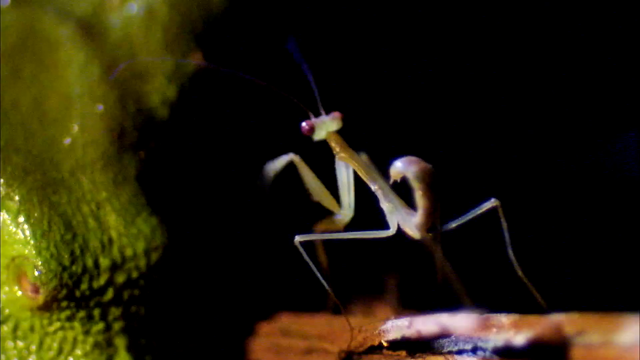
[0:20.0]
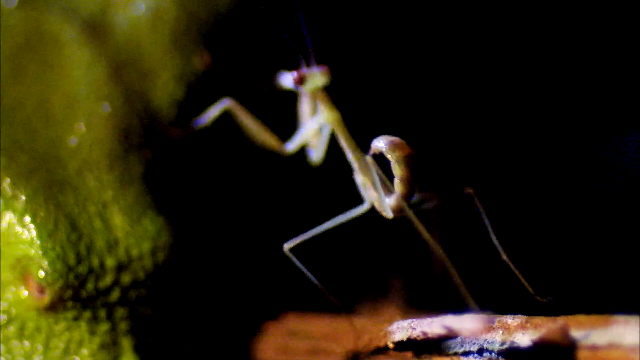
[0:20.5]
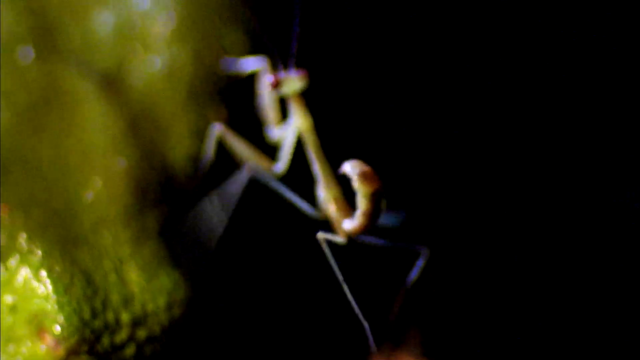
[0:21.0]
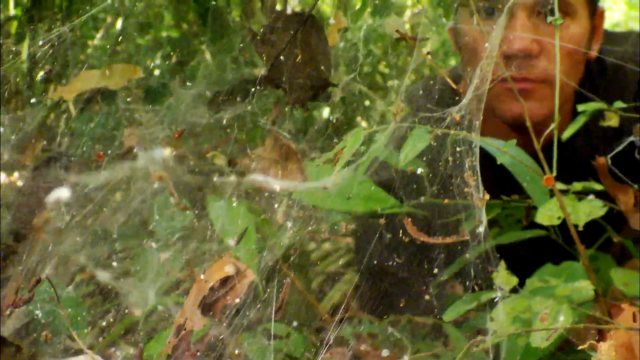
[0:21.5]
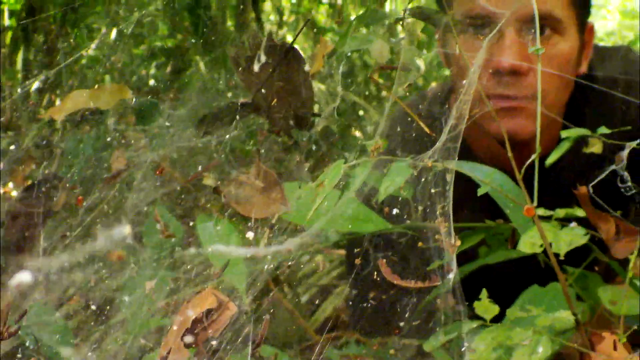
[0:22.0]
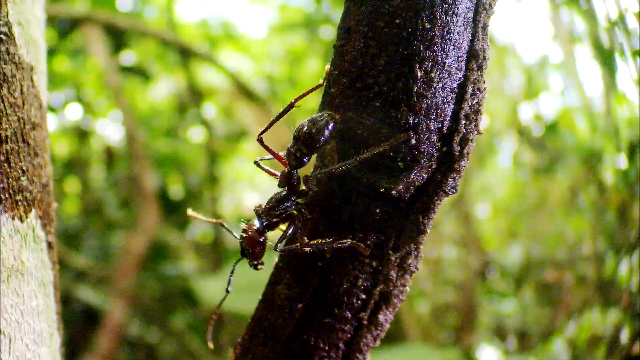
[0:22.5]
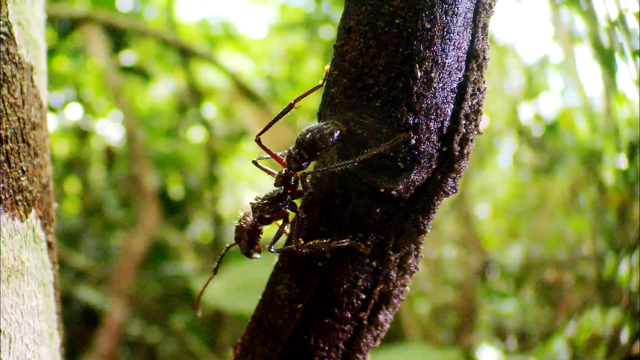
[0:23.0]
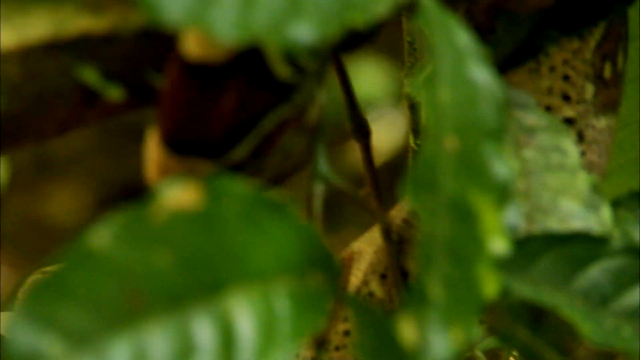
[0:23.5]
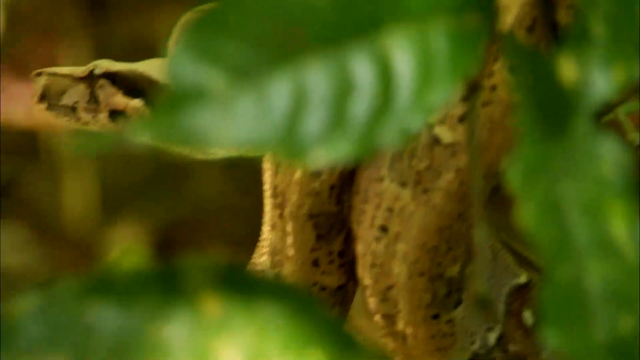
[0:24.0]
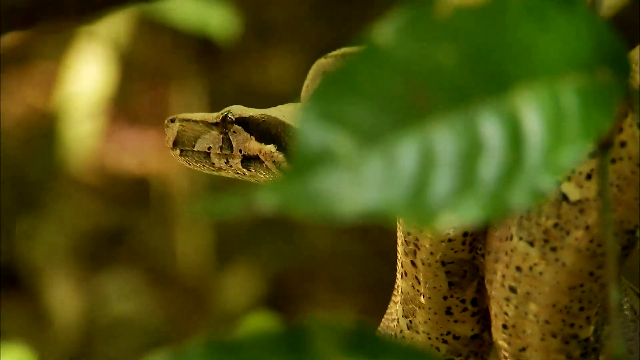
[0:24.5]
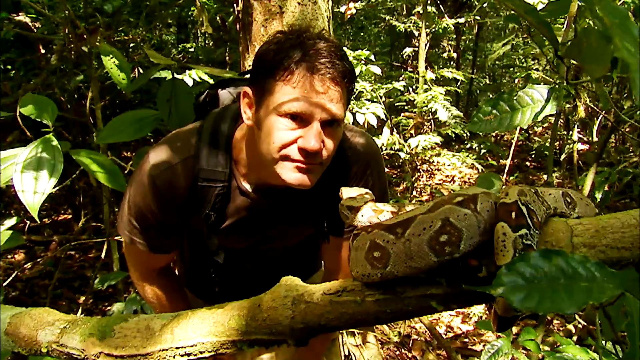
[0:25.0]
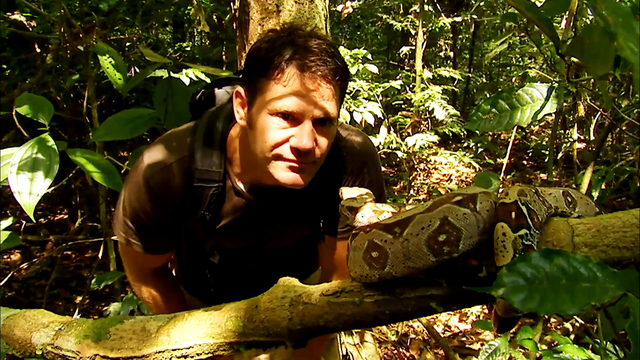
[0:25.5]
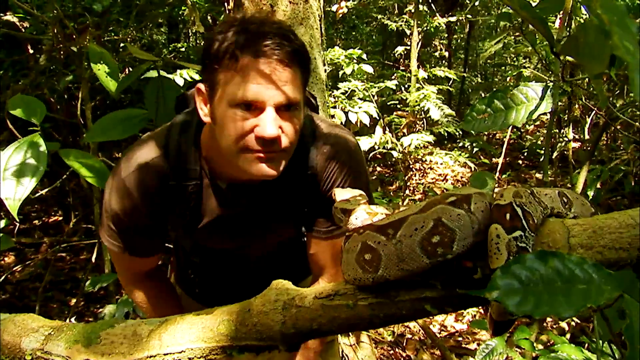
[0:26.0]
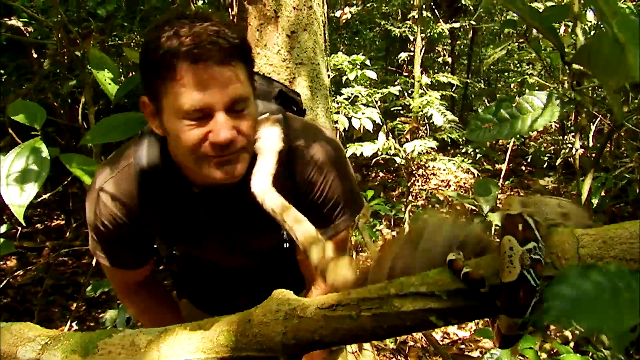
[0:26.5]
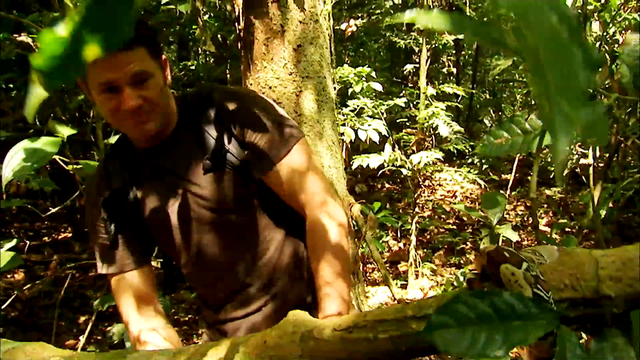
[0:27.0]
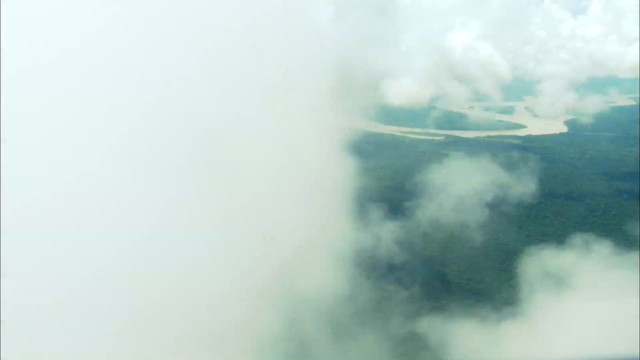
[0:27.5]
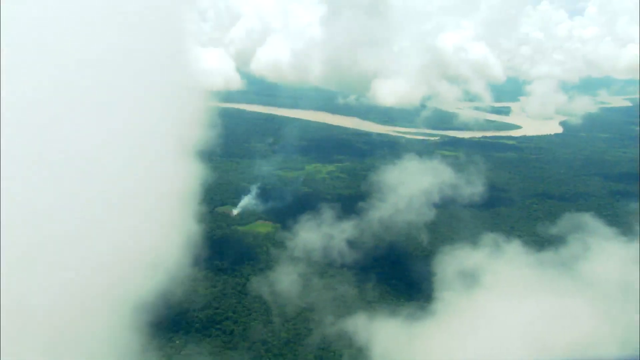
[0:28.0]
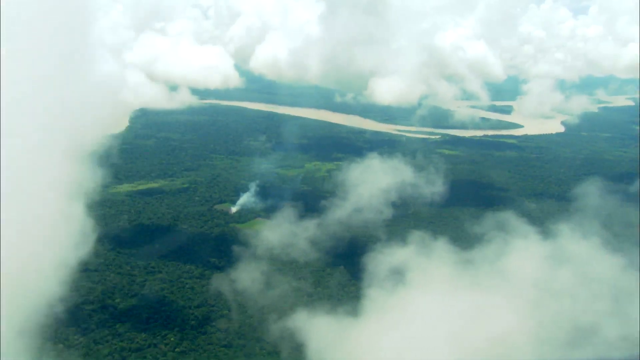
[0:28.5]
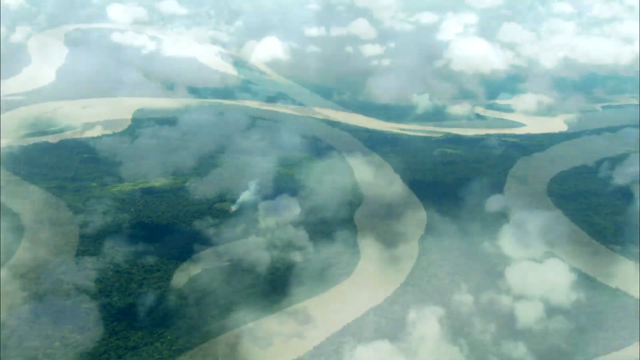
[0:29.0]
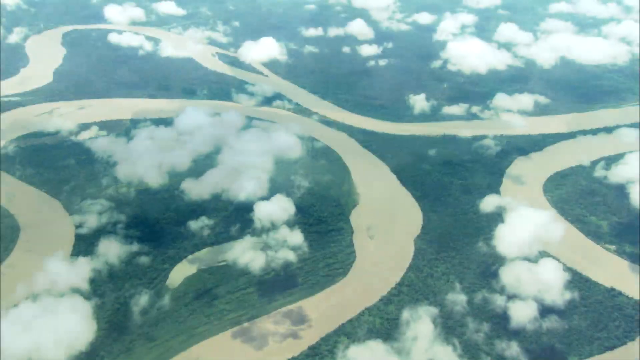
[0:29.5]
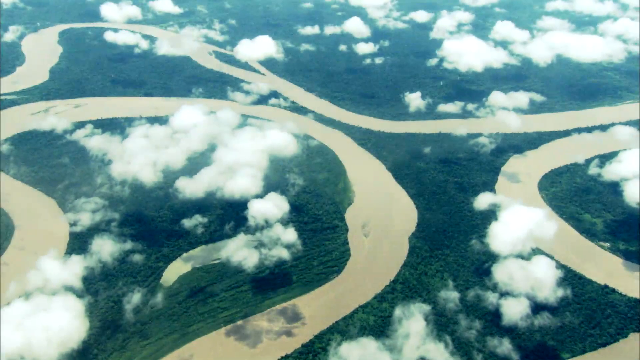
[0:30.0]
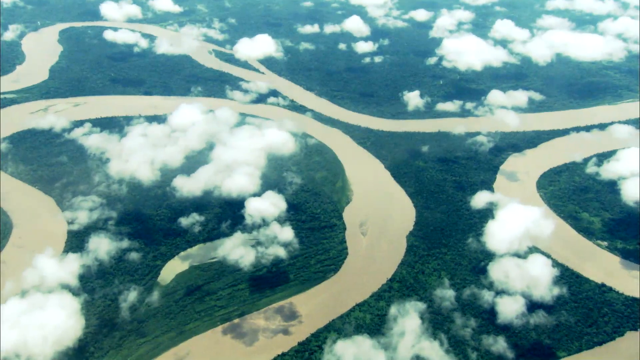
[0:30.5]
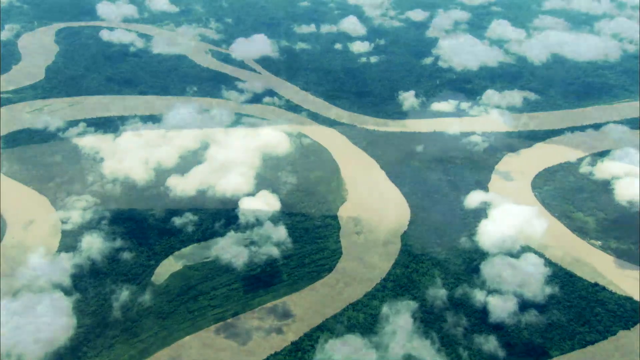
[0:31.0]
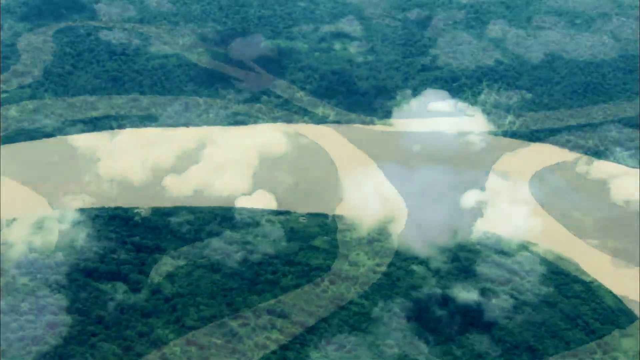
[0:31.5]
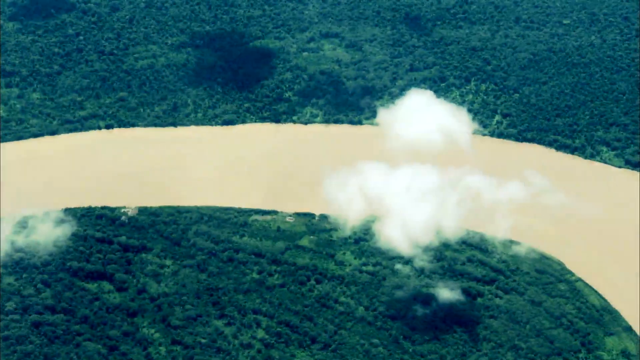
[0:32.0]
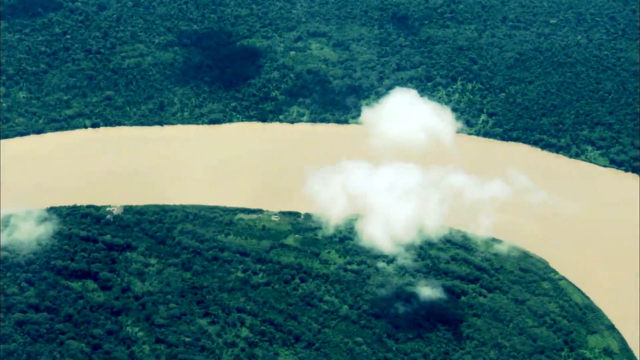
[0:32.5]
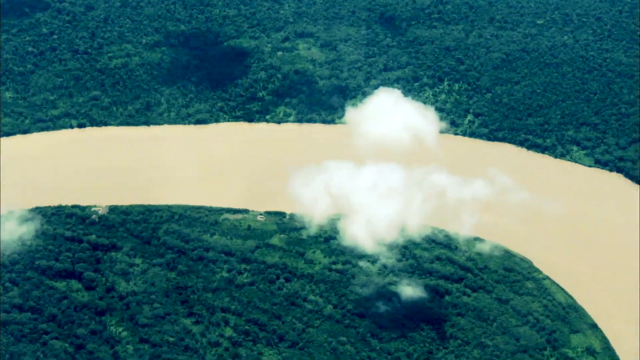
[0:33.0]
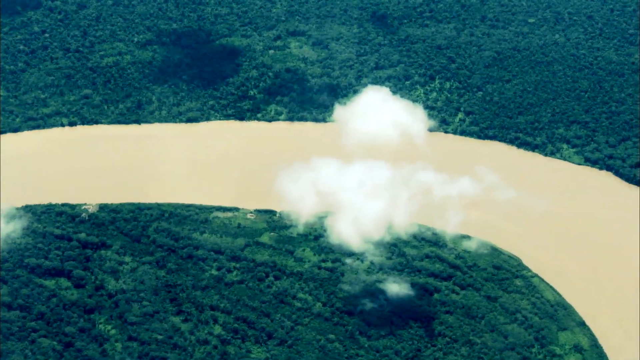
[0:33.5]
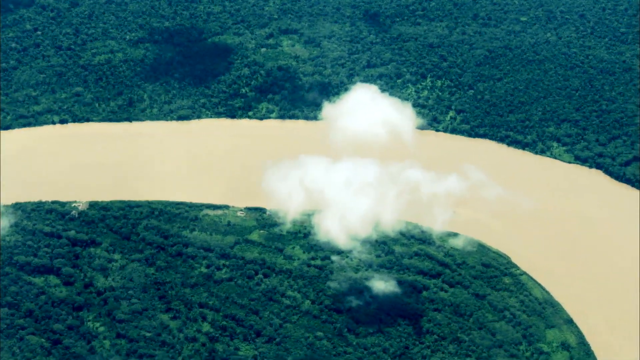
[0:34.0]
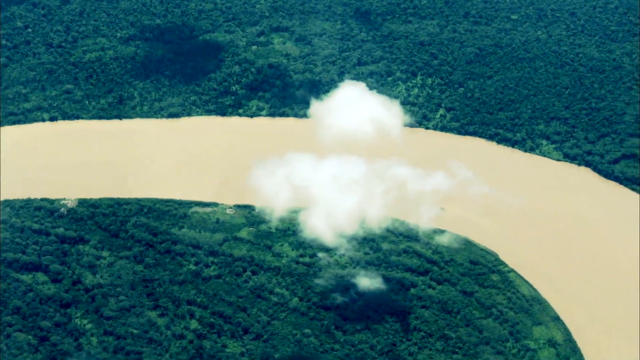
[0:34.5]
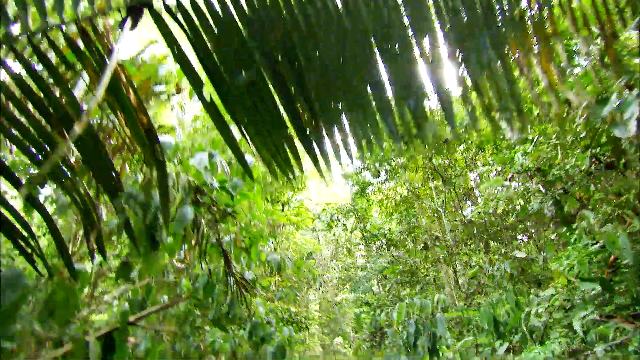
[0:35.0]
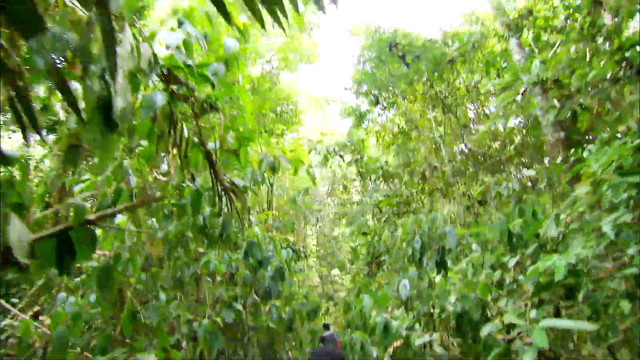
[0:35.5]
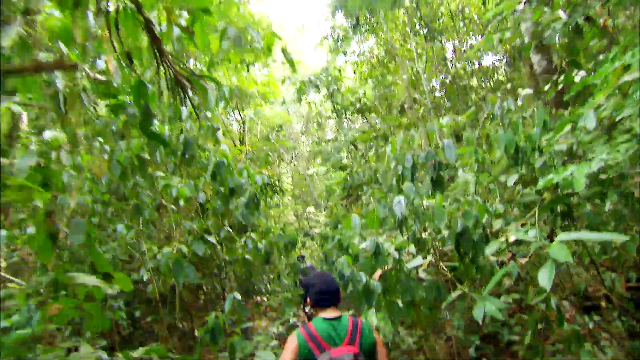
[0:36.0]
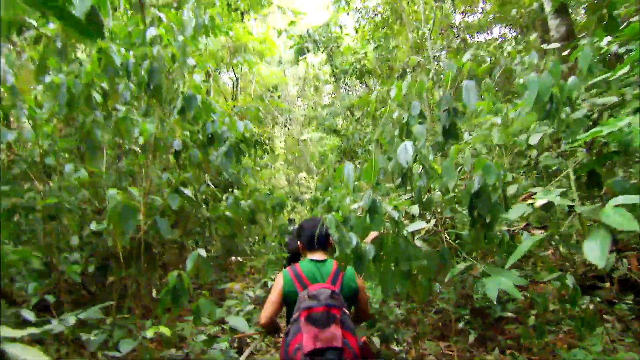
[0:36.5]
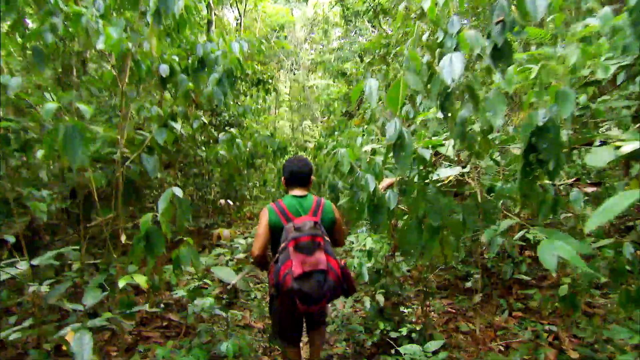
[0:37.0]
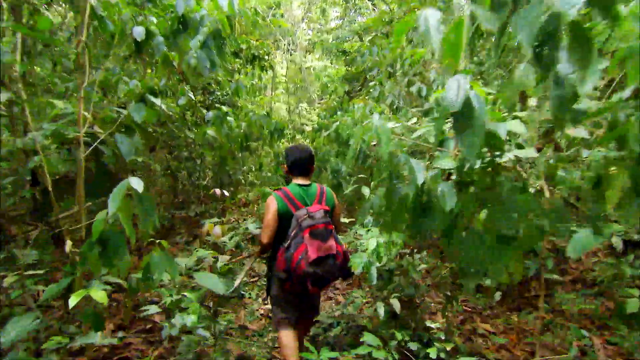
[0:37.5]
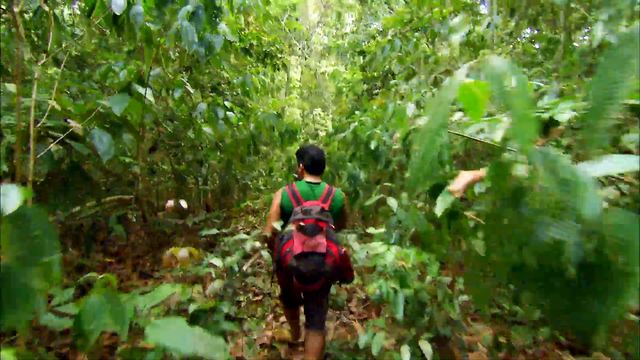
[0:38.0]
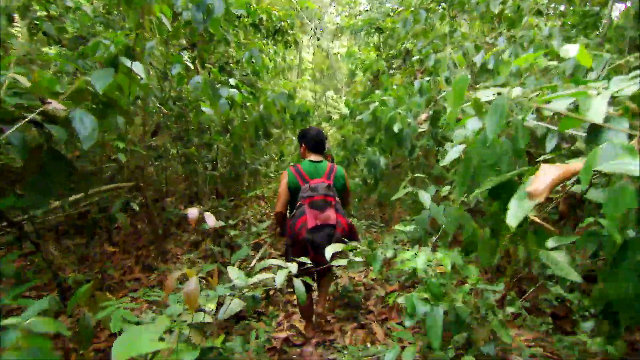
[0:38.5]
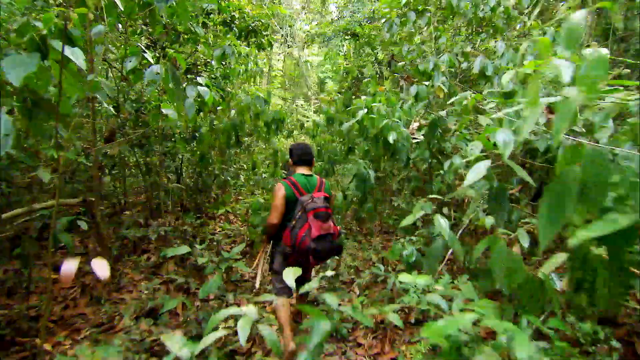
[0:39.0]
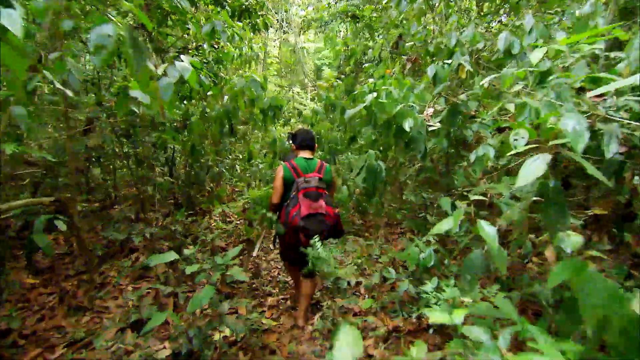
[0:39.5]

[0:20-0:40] A close-up shows what looks like a tiny grasshopper. The video cuts to the man behind what looks like a giant spider web, then to a close-up of what looks like a large ant on a tree. A yellow snake appears, kind of hidden behind a green leaf. In a close-up, the man looks a snake directly in the face; he faces the camera while the snake faces away. He gets up close and the snake jumps out to bite him in the face. The video cuts to sky footage with clouds floating by, then an overhead shot with bodies of water at the bottom, then a closer image of a large body of water, possibly a river. People with backpacks then walk away from the camera through a rainforest-like area; one person has a red backpack.